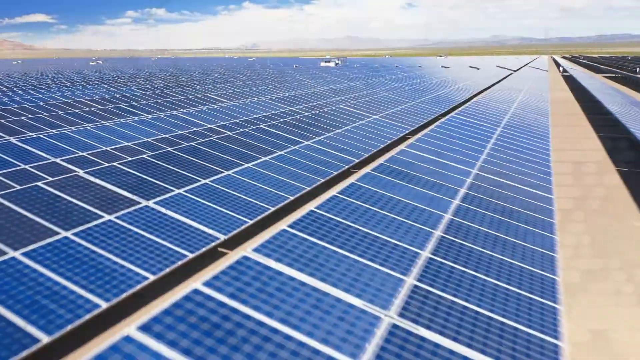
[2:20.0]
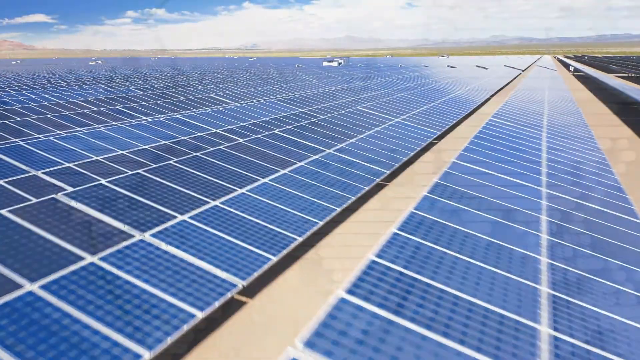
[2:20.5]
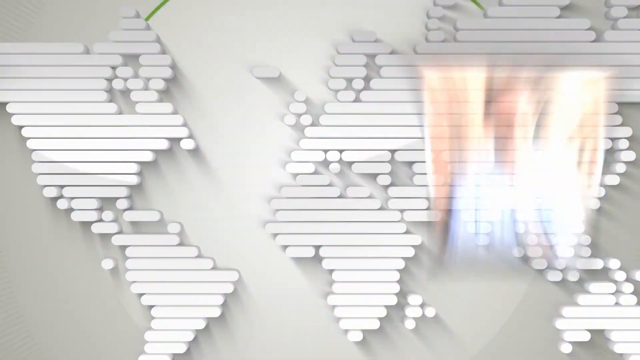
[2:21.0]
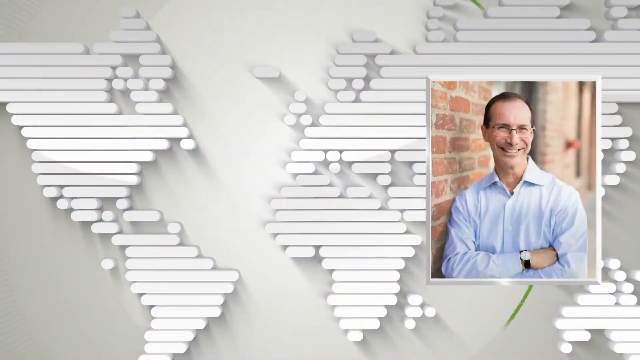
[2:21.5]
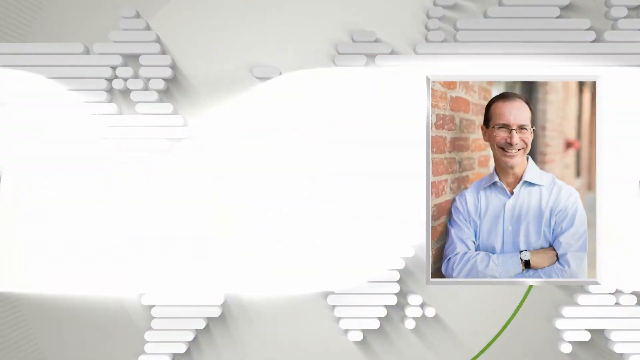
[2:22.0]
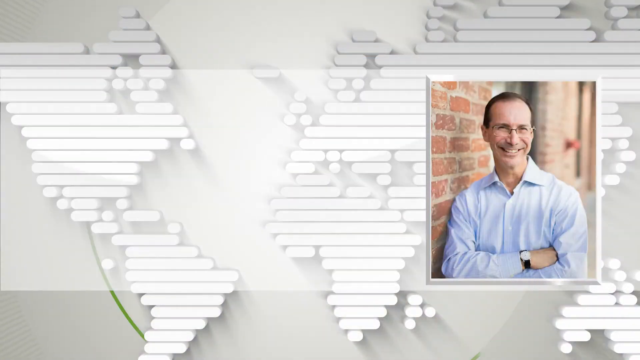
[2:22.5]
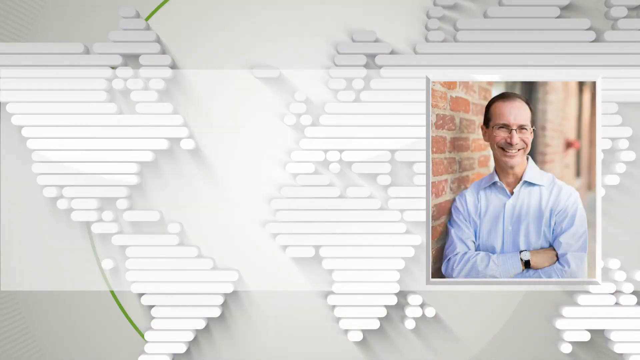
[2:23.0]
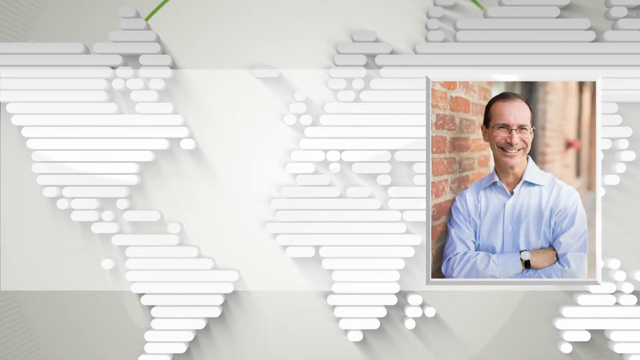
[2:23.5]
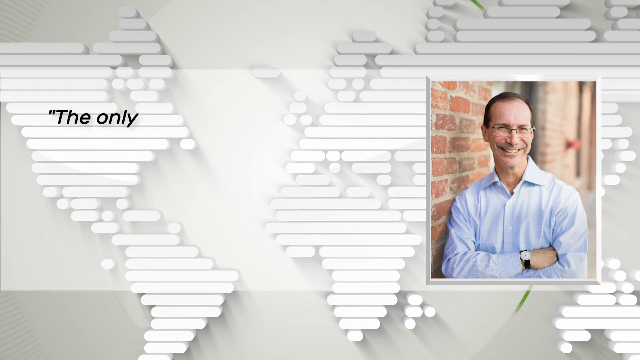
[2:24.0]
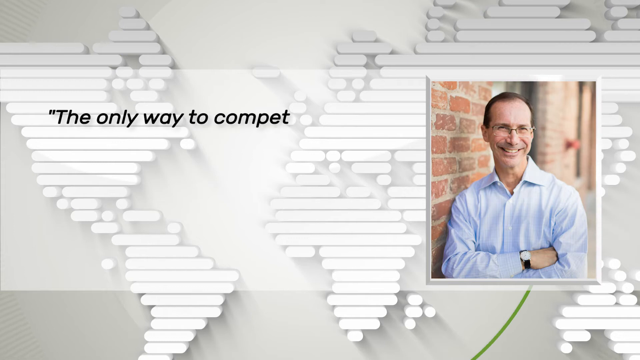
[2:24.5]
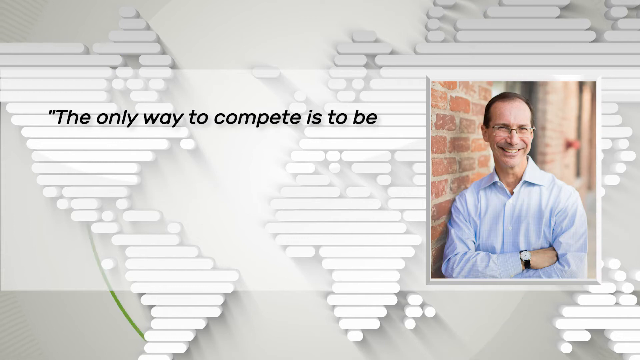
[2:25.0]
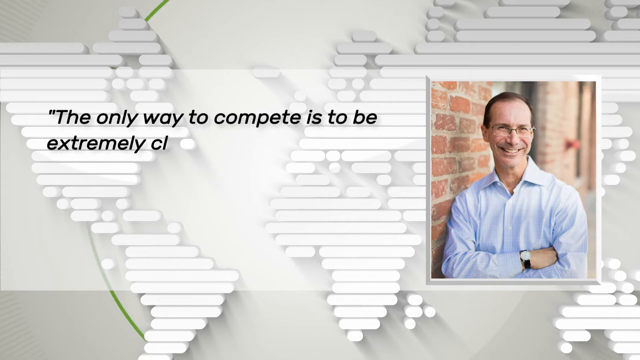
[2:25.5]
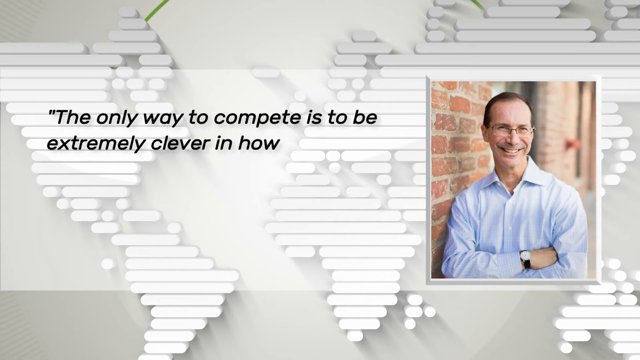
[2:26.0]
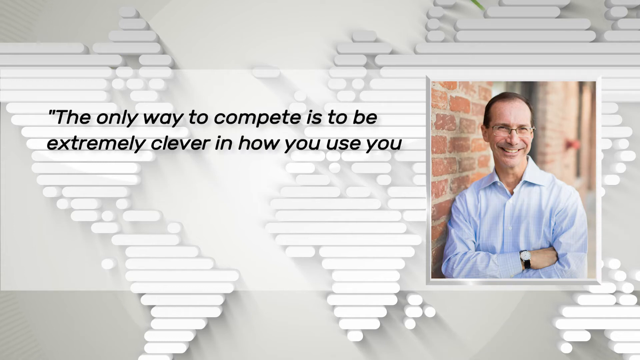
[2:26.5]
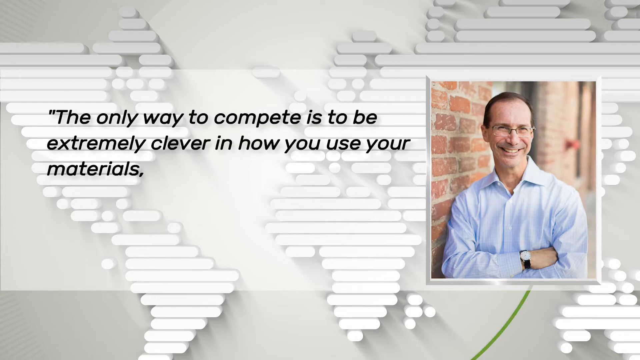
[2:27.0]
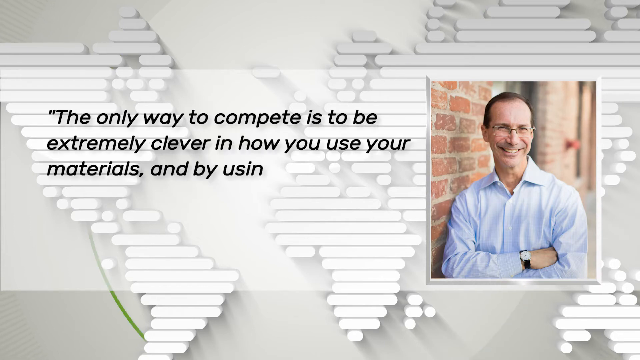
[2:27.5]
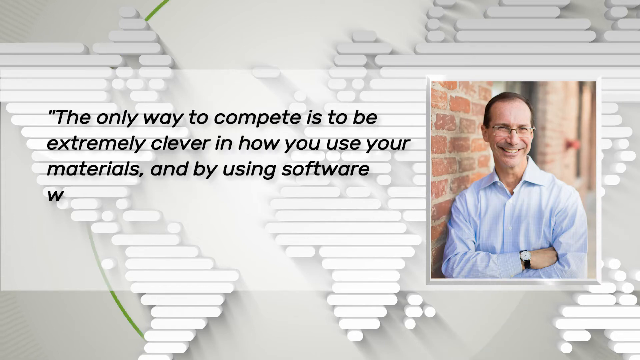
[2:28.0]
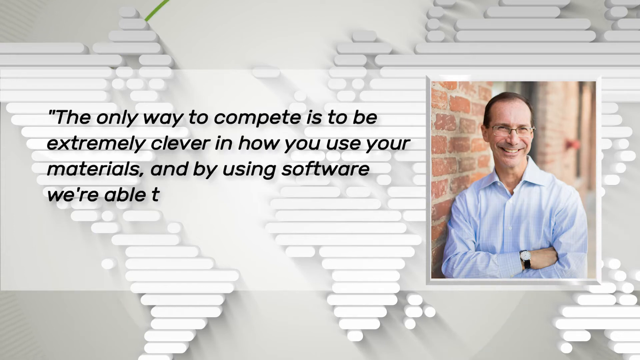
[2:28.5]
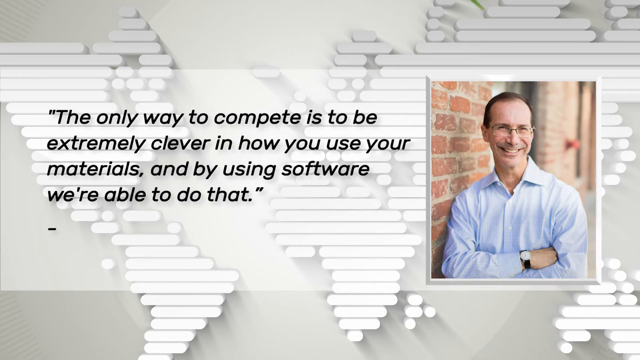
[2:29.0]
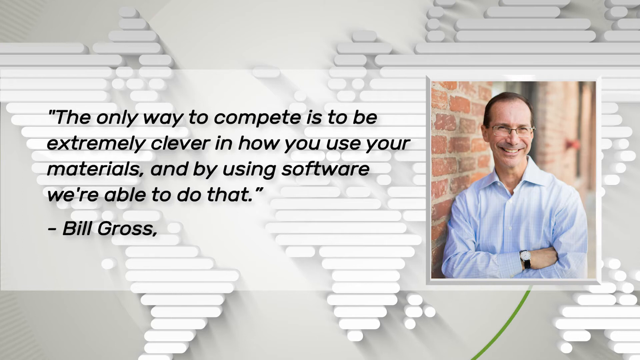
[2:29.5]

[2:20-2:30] A quote by William Gates III, or Bill Gates, reads: "I am pleased to have been an early backer of Bill Gross' novel Solar Concentration Technology, its capacity to achieve the high temperatures required for the processes is a promising development in the quest to one day replace fossil fuels." A response quote follows from Bill Gross, the head of Heliogen: "The only way to compete is to be extremely clever in how you use your materials, and by using software, we're able to do that."